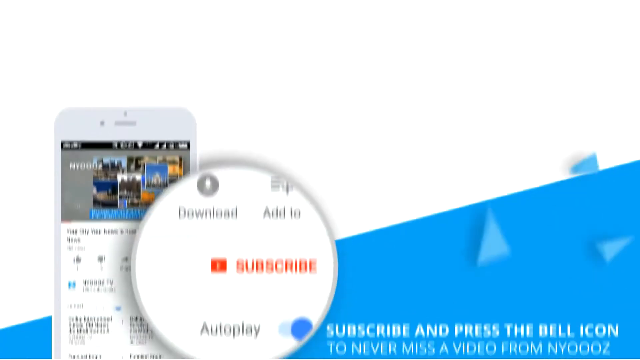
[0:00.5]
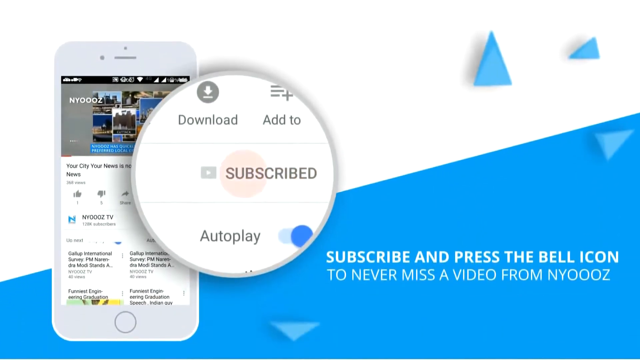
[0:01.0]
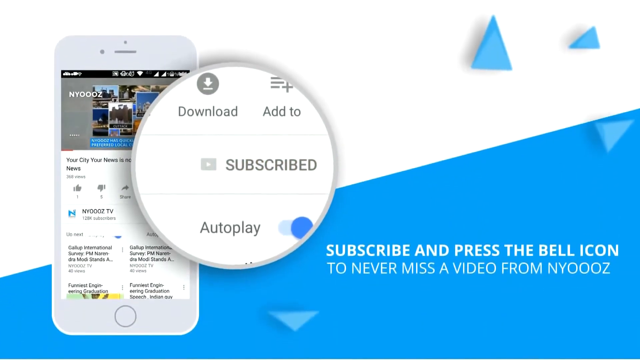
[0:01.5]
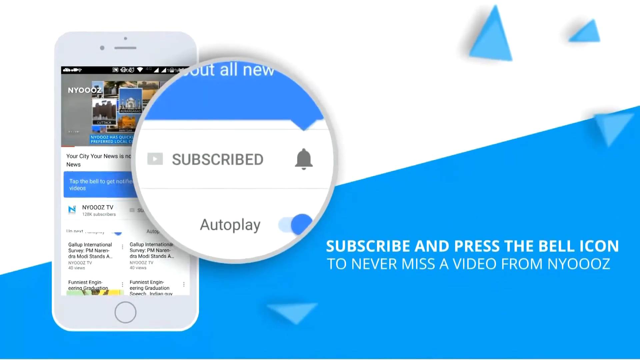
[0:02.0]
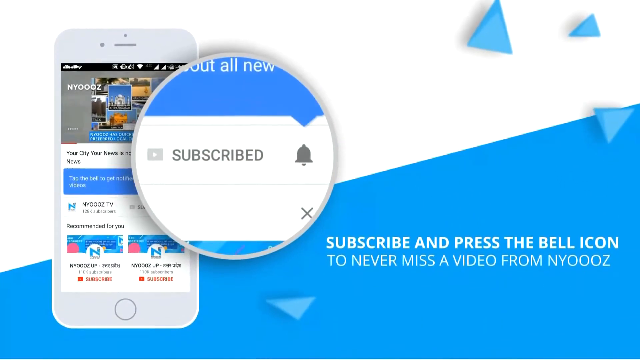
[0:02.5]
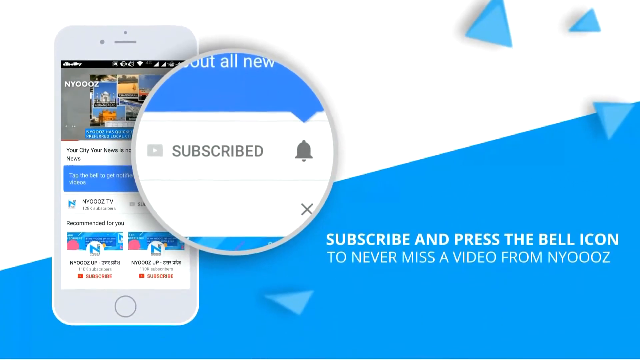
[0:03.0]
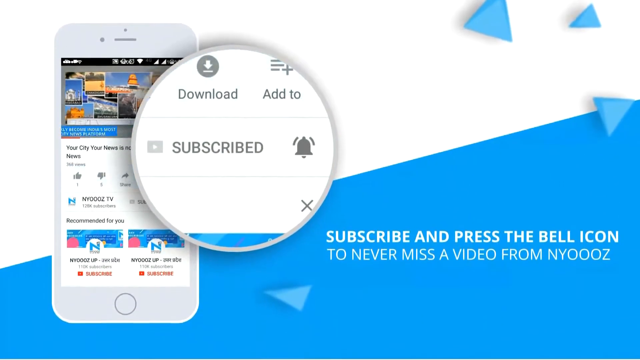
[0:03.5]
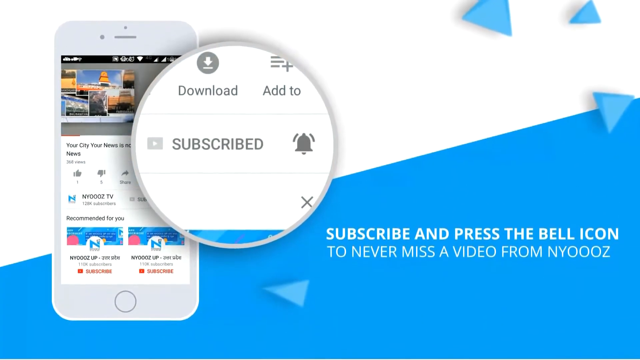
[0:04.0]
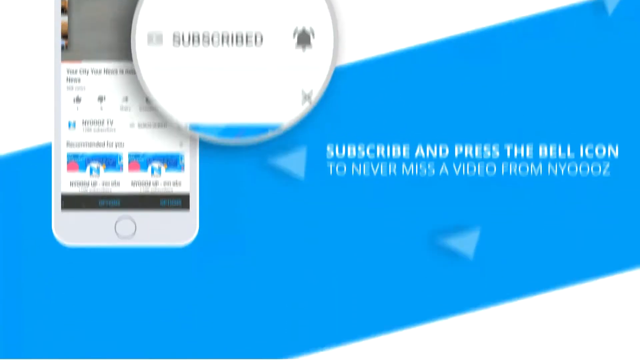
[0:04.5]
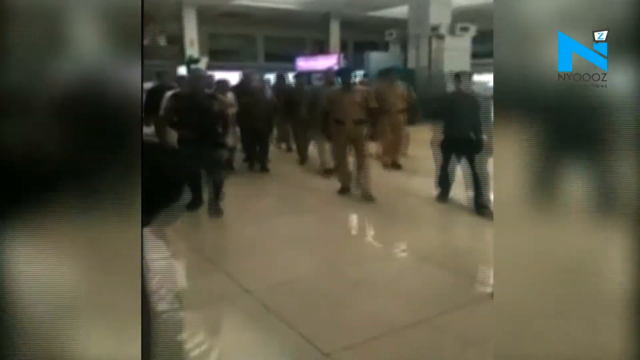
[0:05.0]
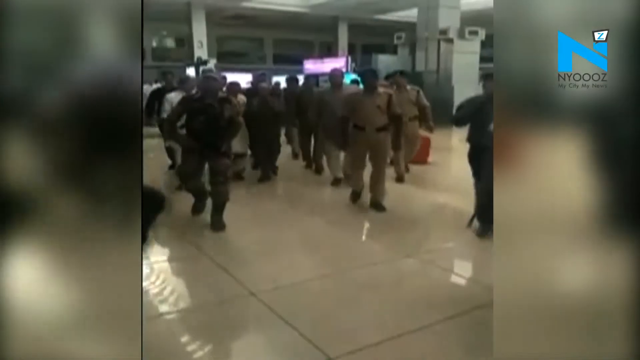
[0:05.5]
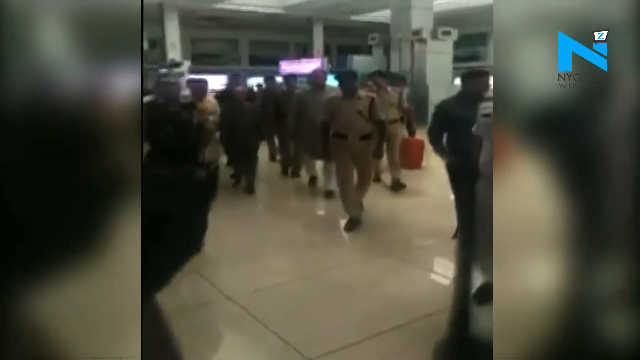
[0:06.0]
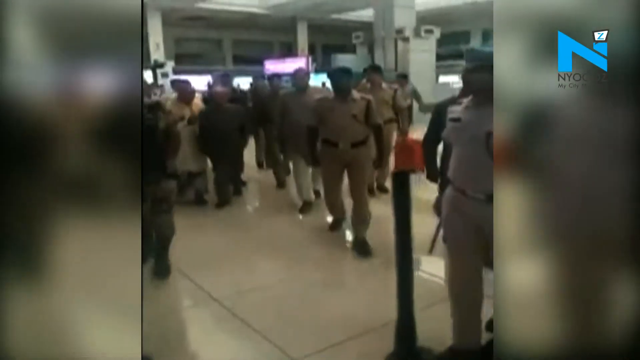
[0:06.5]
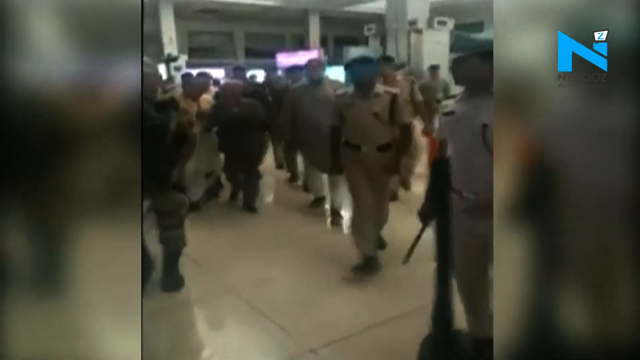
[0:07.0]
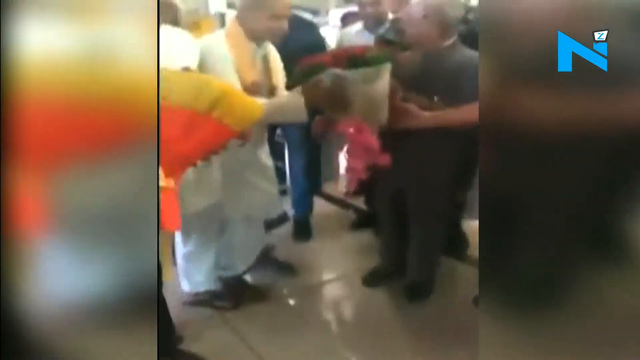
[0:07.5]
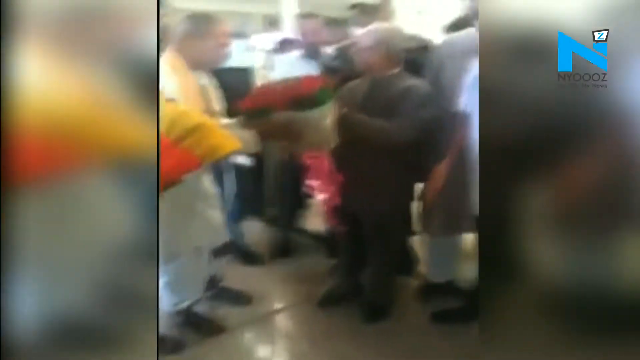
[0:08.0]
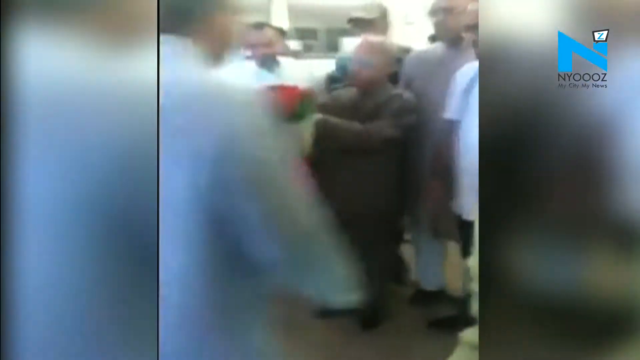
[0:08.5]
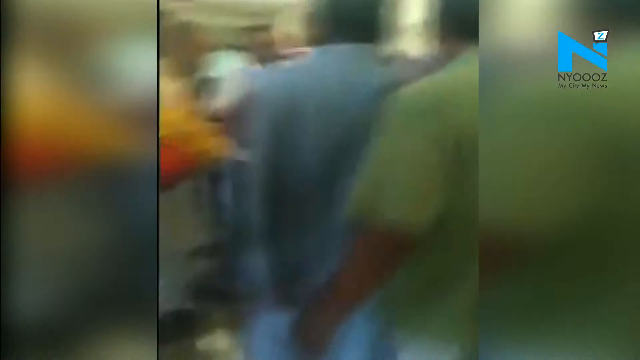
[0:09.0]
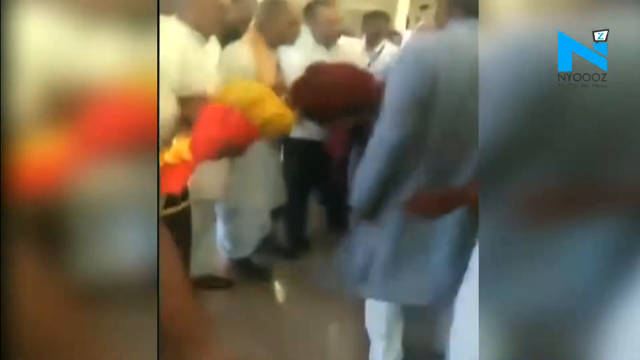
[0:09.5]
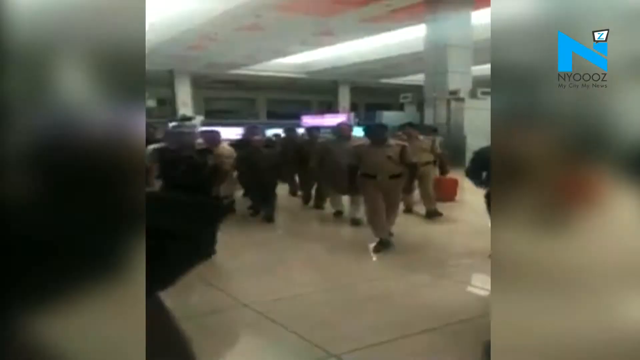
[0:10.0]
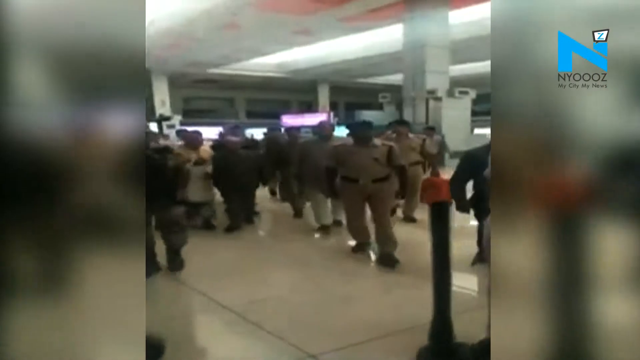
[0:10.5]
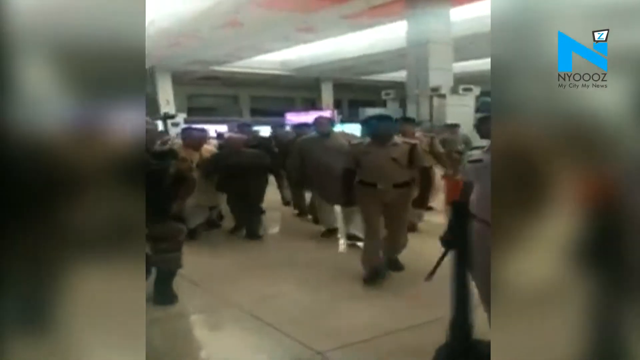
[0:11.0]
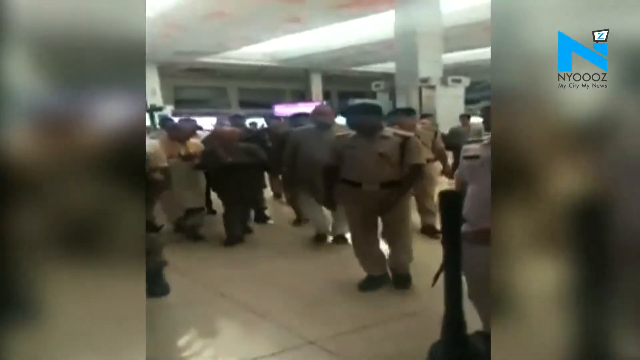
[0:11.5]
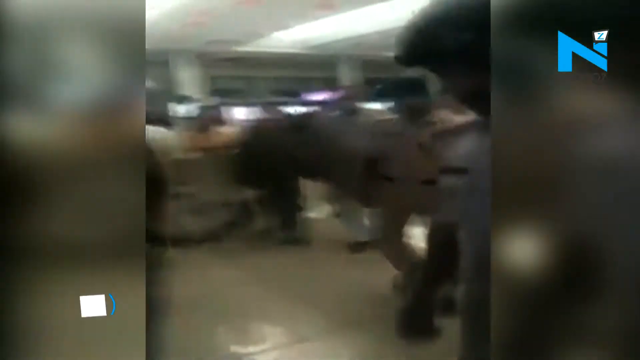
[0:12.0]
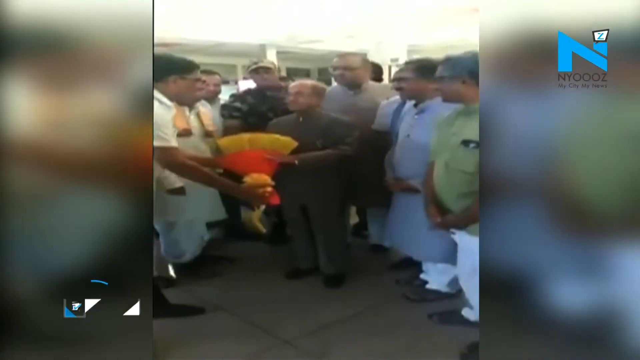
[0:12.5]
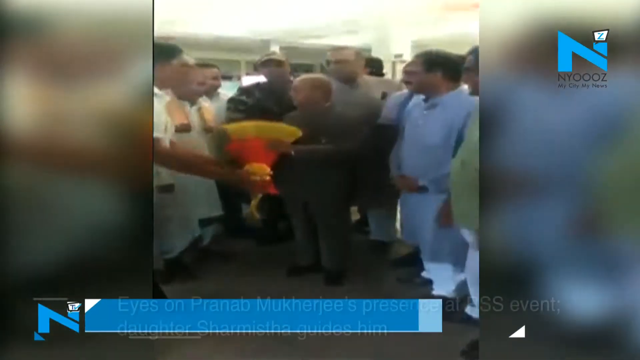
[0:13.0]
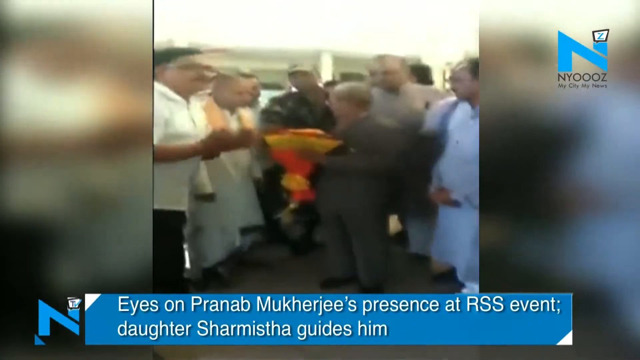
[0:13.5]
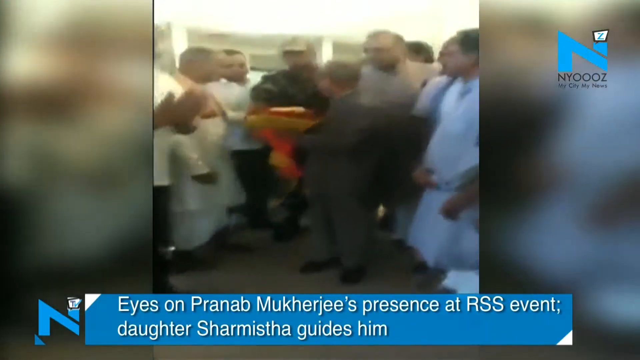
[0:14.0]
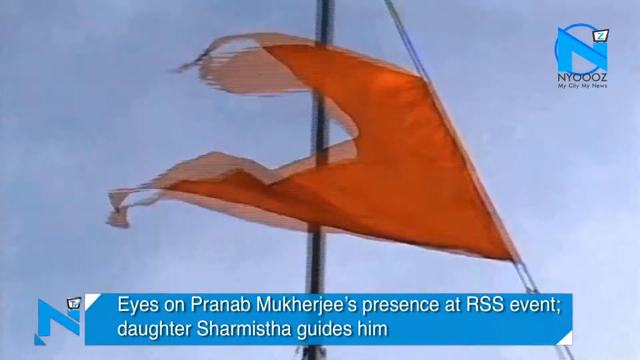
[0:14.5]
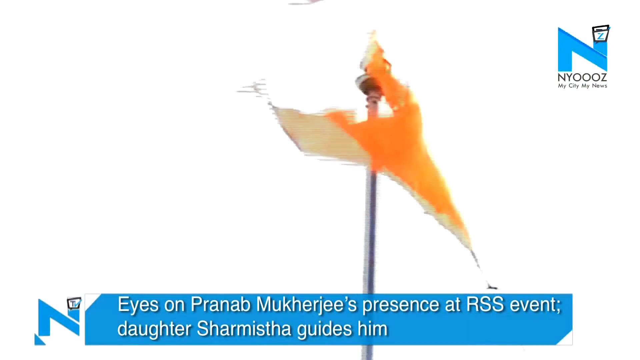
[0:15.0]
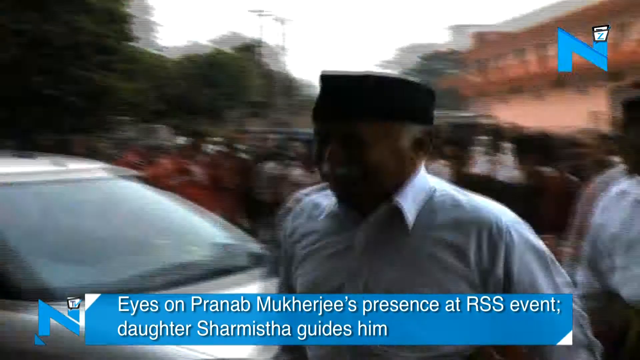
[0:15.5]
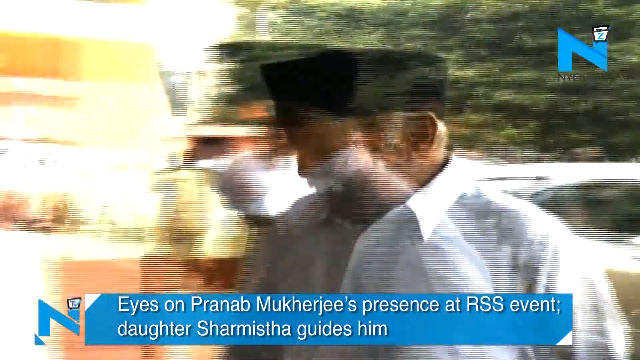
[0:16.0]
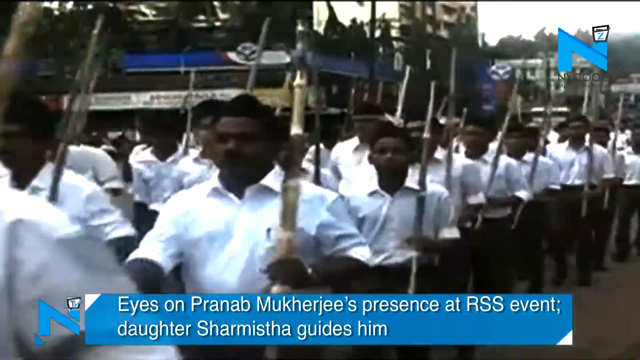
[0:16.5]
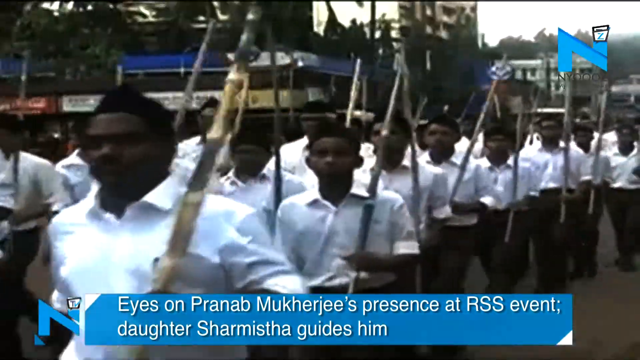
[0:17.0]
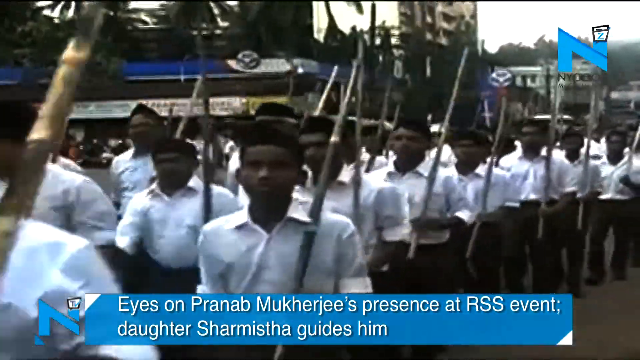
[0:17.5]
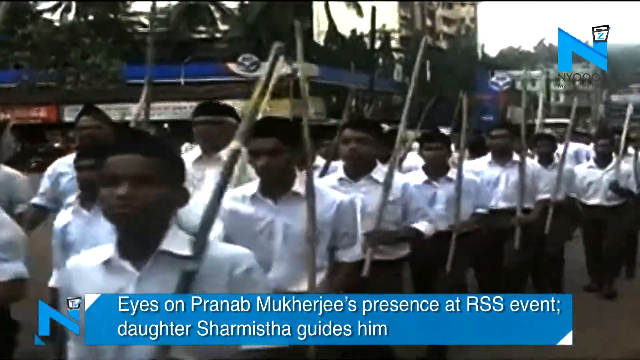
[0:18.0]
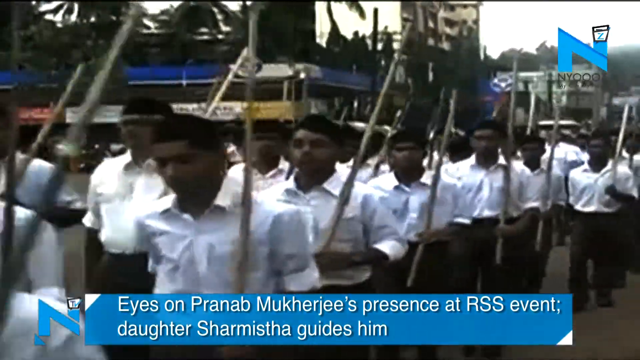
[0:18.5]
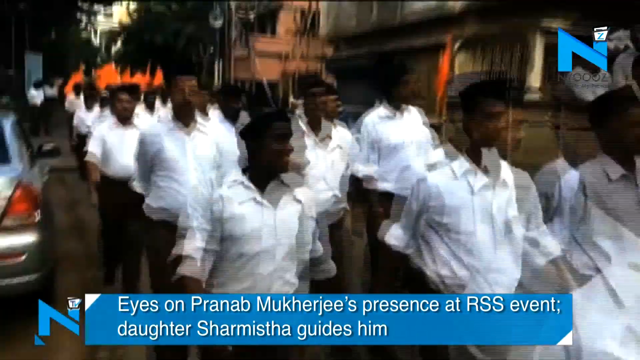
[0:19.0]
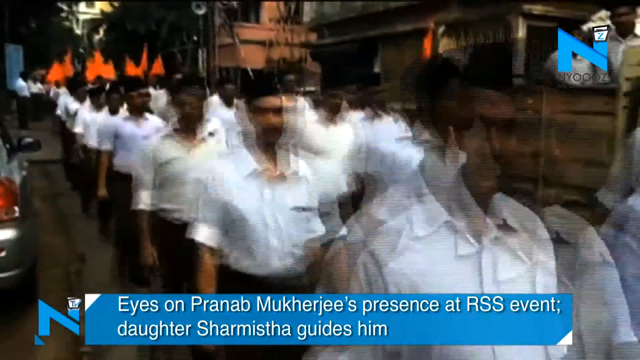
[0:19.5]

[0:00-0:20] A smartphone appears on the left side of the screen. The phone is off-white, and its screen displays "NY000Z". The top part of the phone screen is grey with a collage of images, and below it is the title of a video, "Harshly Obscured". Under the title are upvote and downvote options, each with "1" written underneath, and next to them is a share icon. Below this there is writing, and at the very bottom is the whole image. A circle magnifies part of the phone screen. Inside it is a small grey circle containing an arrow pointing down with a small horizontal line underneath, and below this is the word "download". Next to that icon is an icon with three horizontal lines and a plus sign, with "add to" written underneath. Below this is "subscribe" with a bell symbol next to it, and at the very bottom is "autoplay" with a blue circle next to it. The background of the image is white and blue, and the blue portion reads "subscribe and press the bell icon to never miss a video from NYOOZ". The scene changes to many men walking about, with text at the bottom reading "Eyes on Pranab Mukherjee's presence at RSS event. Daughter Sharmishta guides him." Many men then walk in formation holding long sticks, all wearing white shirts and black trousers.